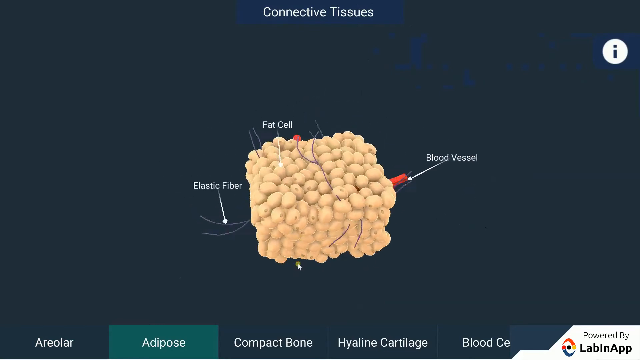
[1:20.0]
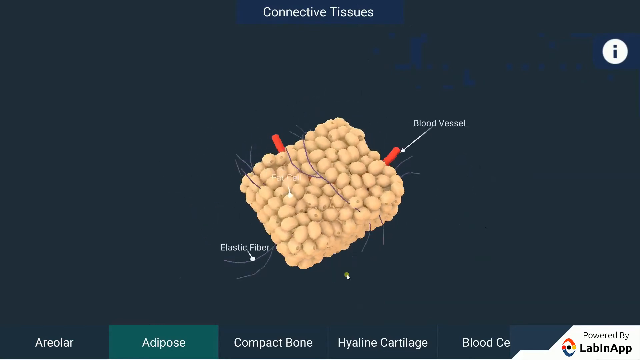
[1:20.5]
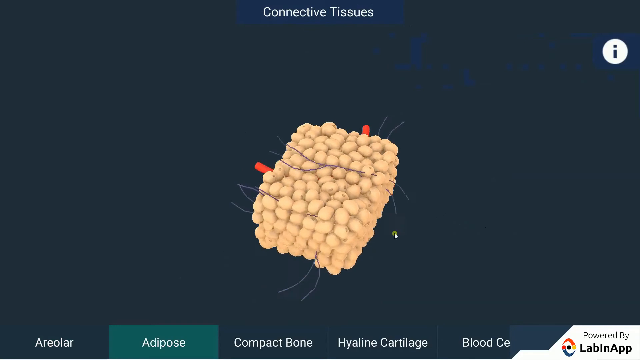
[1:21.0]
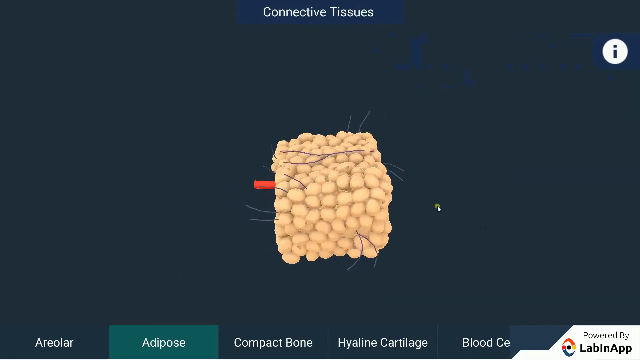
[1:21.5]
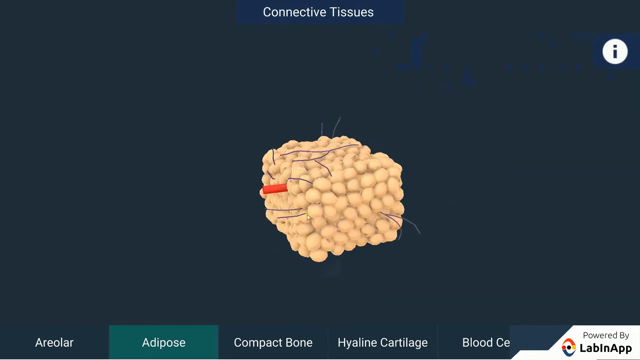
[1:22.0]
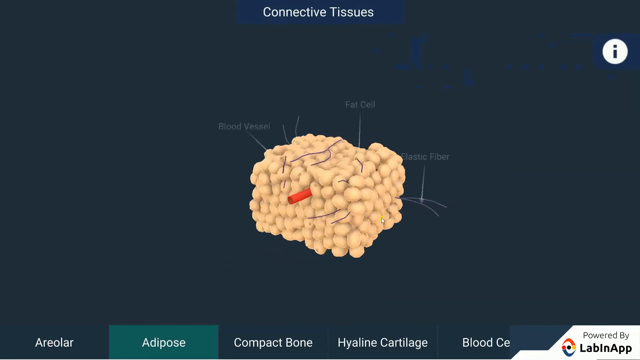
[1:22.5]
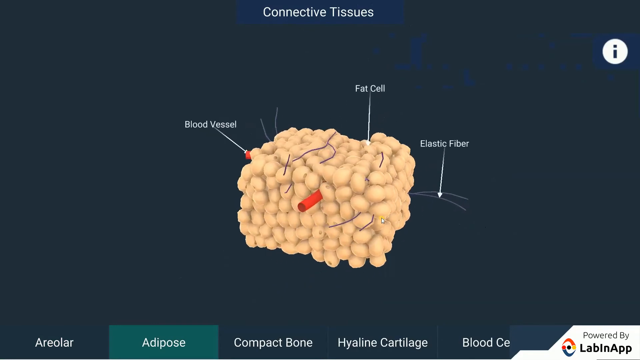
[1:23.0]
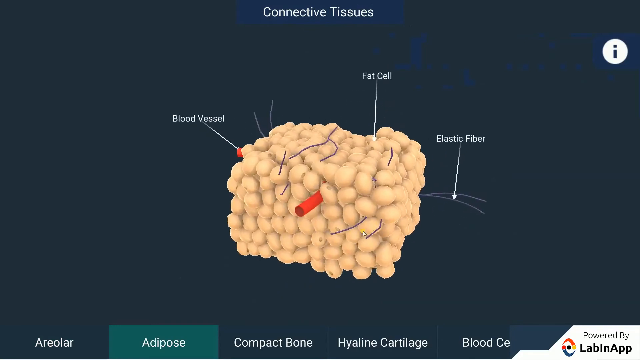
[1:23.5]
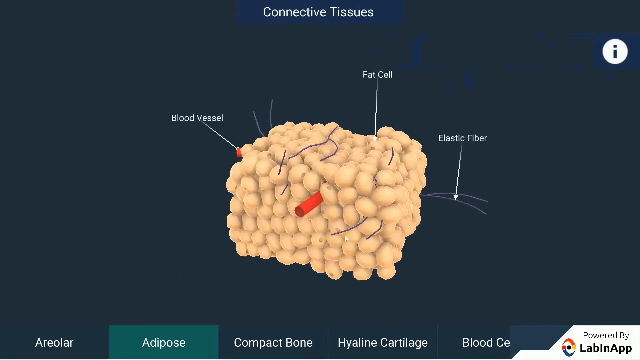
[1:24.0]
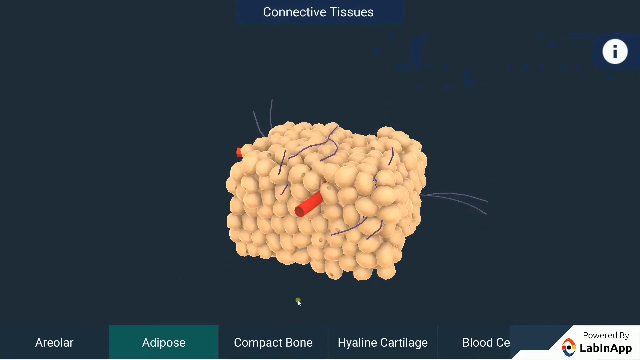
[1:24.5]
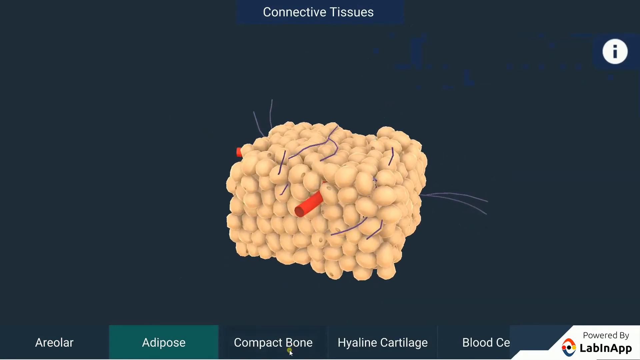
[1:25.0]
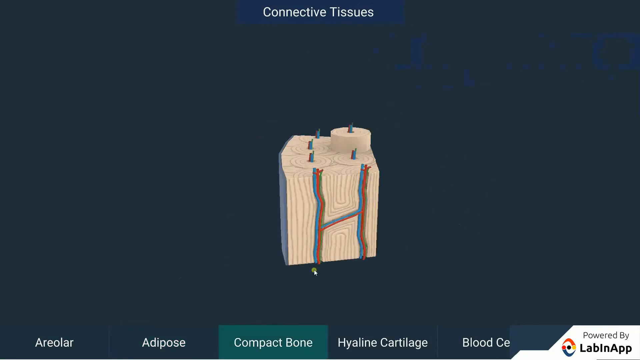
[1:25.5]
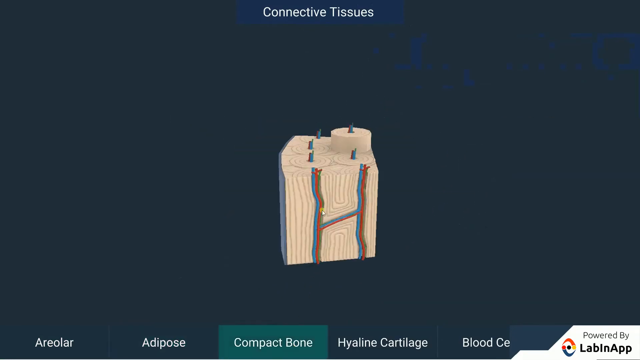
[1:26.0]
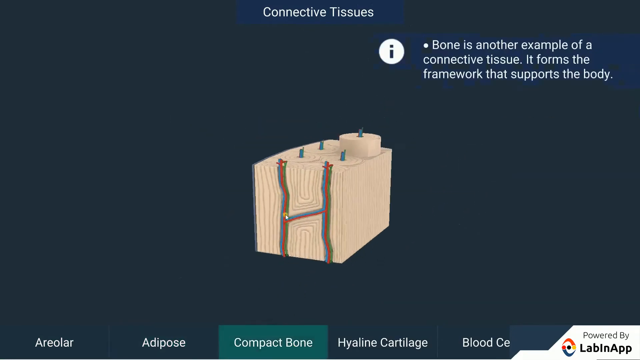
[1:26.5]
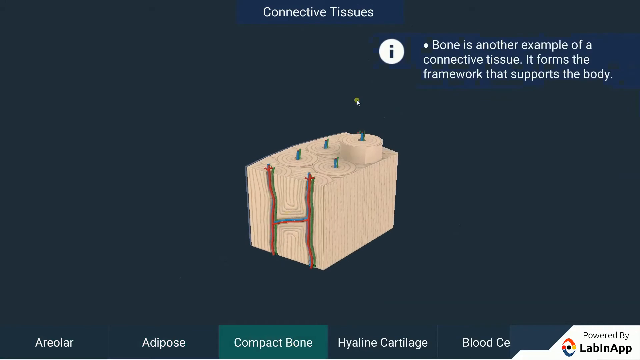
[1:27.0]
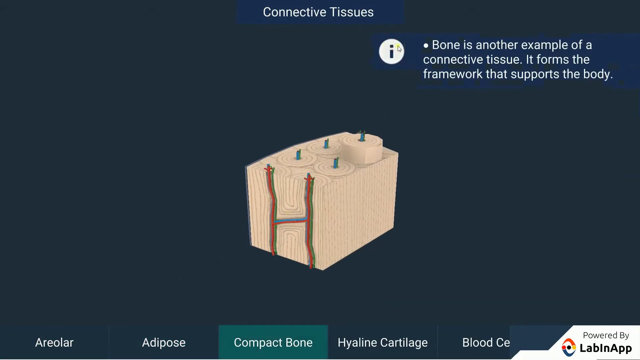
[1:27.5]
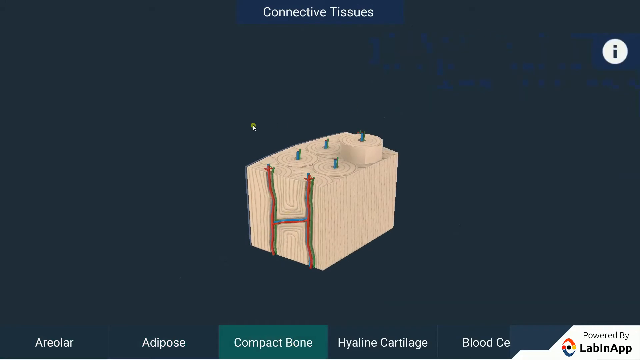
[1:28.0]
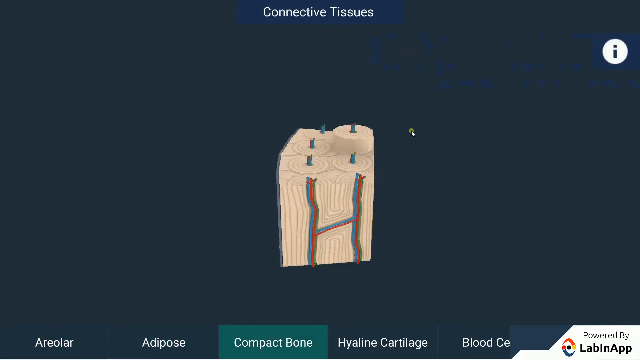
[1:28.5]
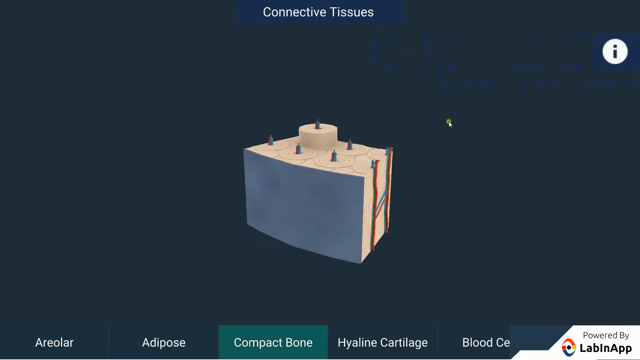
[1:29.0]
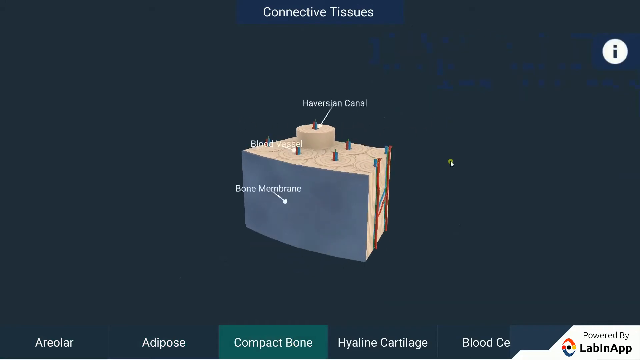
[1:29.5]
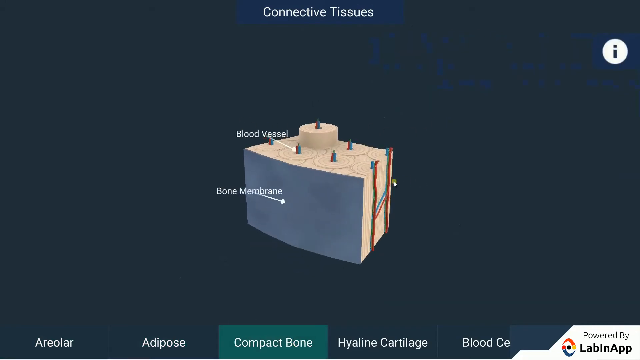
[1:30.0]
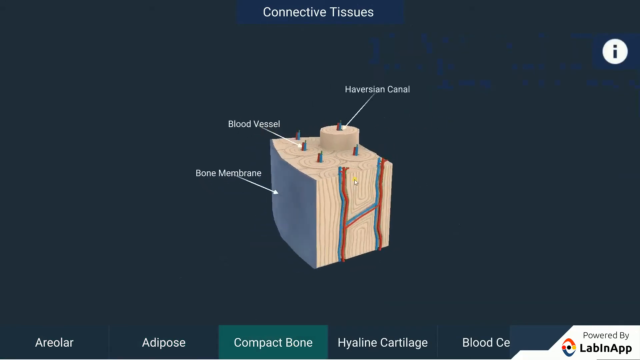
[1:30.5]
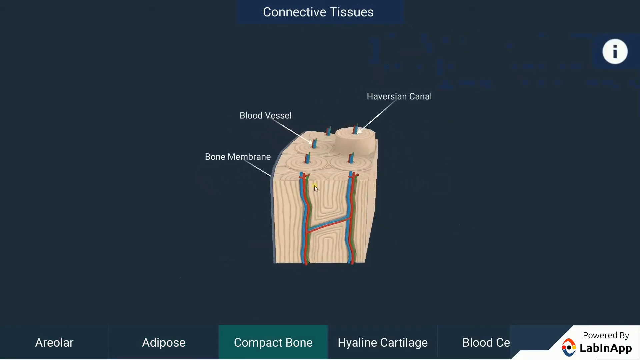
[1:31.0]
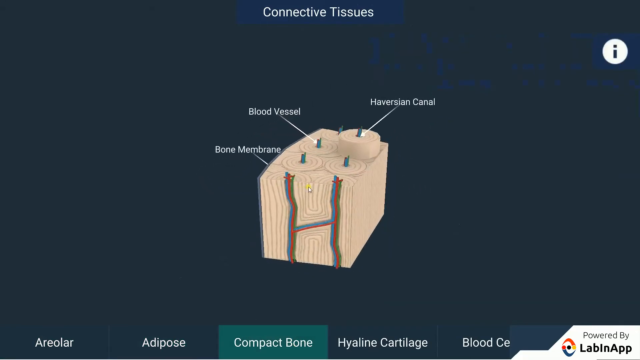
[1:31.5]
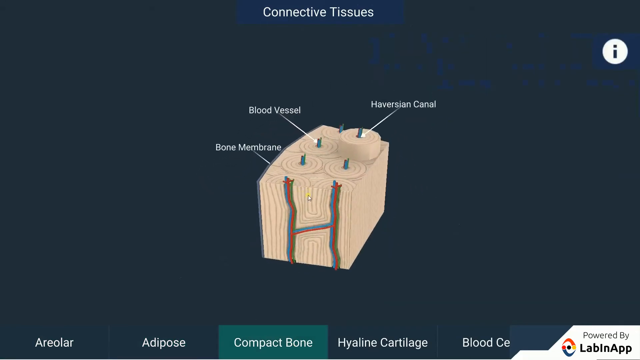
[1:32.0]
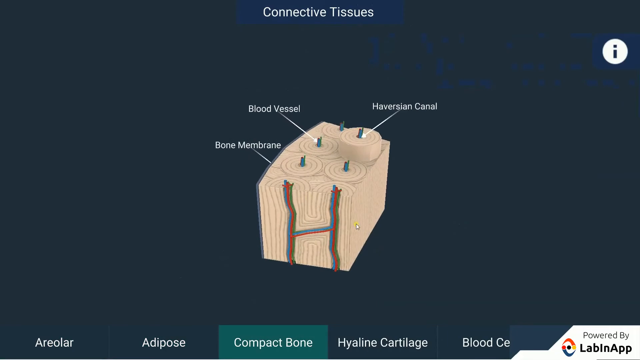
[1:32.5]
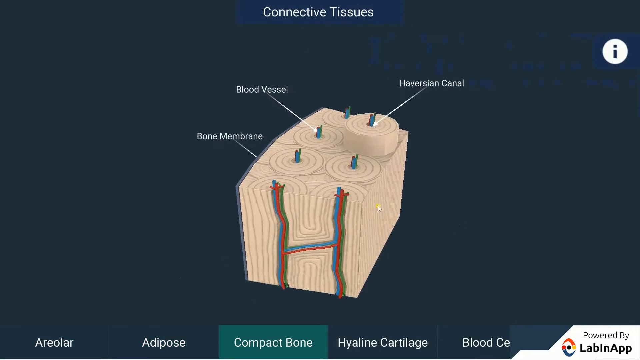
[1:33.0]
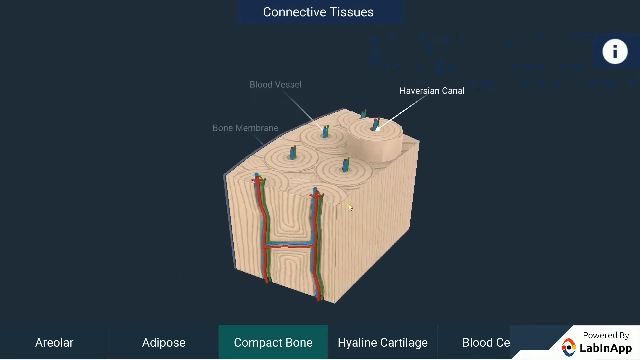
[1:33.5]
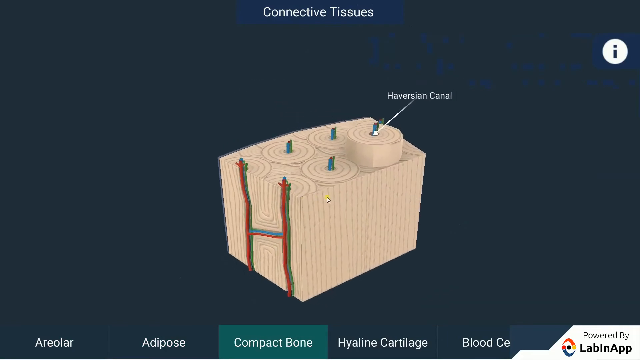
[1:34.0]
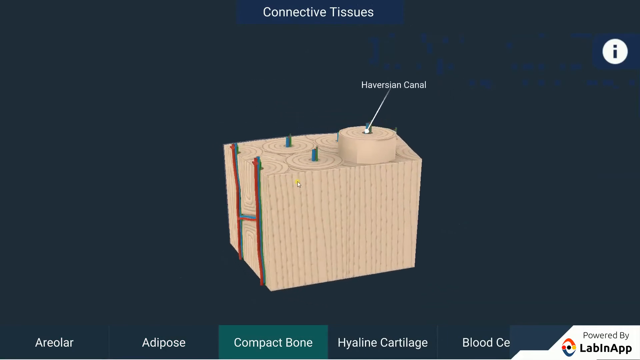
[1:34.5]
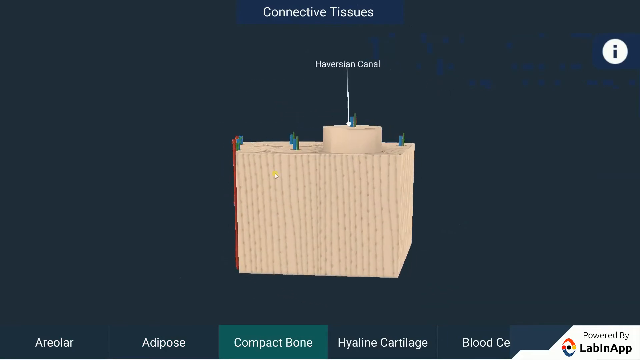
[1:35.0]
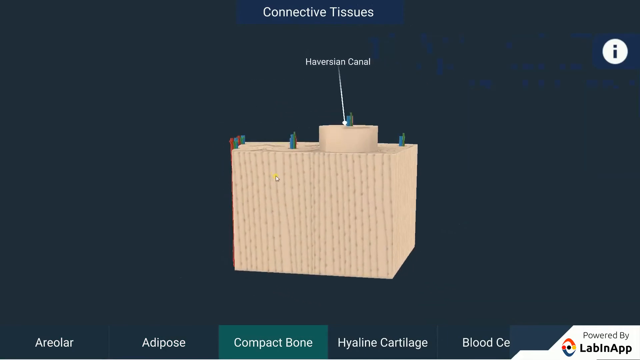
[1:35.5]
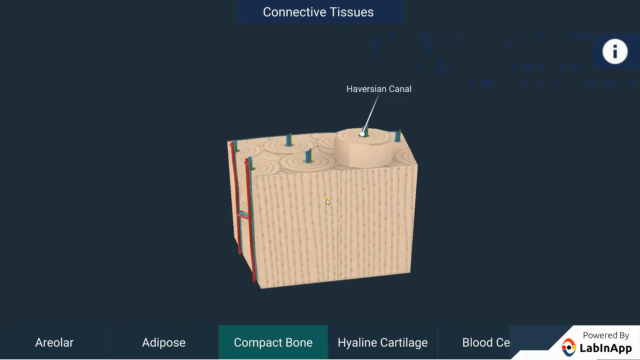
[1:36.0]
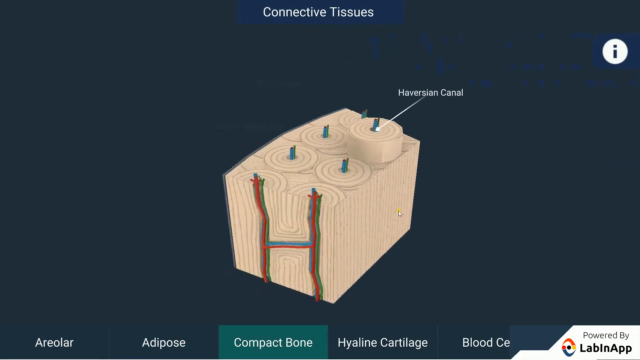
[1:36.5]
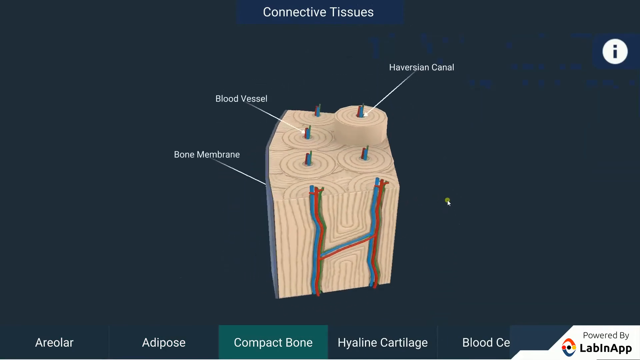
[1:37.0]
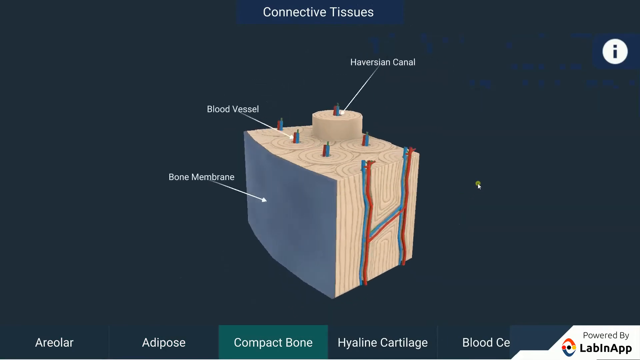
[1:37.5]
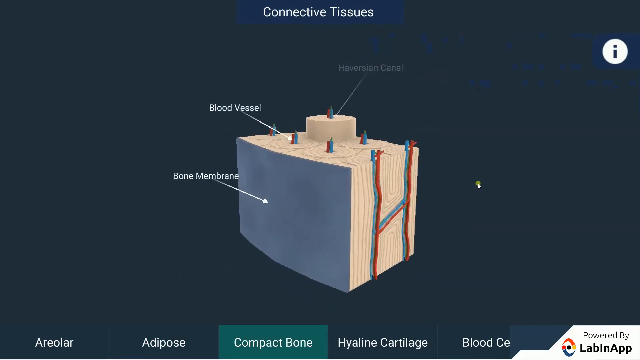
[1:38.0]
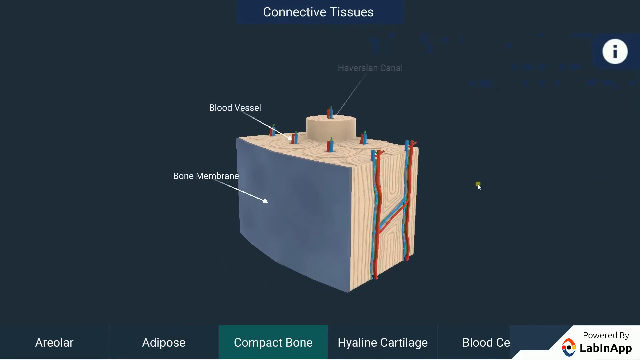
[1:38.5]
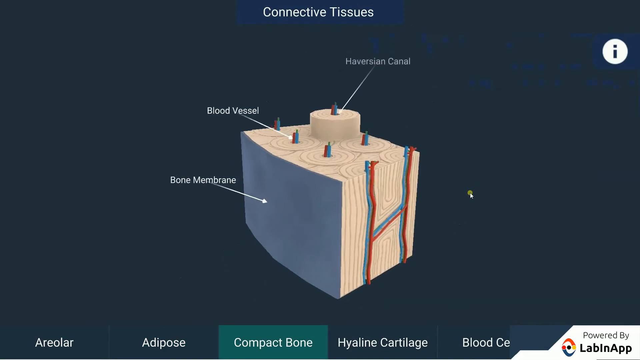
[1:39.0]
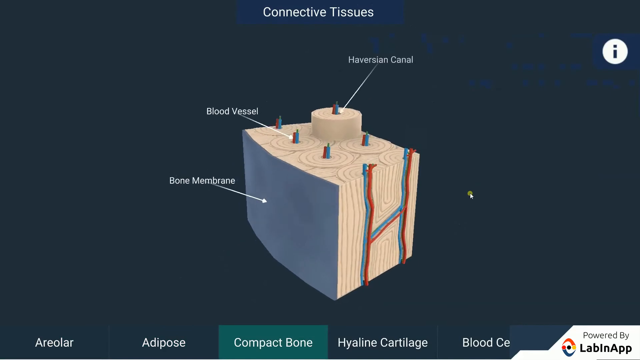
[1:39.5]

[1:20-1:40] The fat cell model is explored more closely as the cursor rotates it. The labels naming the organelles, which point to different parts of the render, disappear and reappear depending on the rotation angle. The mouse then goes to the next section of the application, "Compact Bone." Clicking it opens another render: a bone cut into the shape of a cube. Text appears at the top right, seemingly extra information, that says "Bone is another example of a connective tissue. It forms the framework that supports the body." The mouse rotates the render, and then labels appear pointing to different parts: "Bone Membrane," "Blood Vessel" and "Haversian Canal."